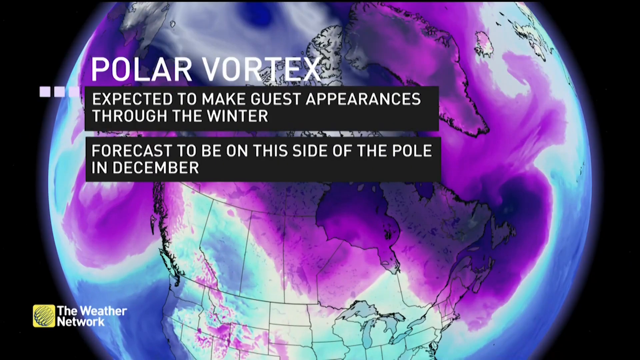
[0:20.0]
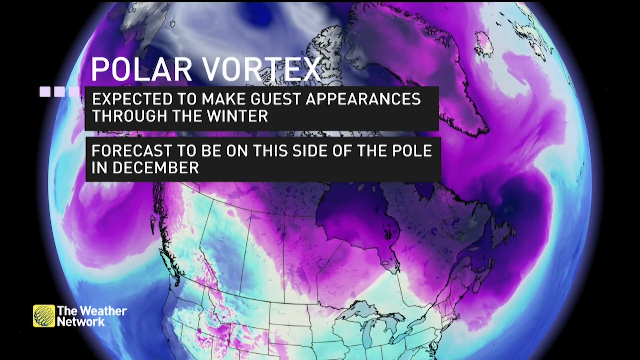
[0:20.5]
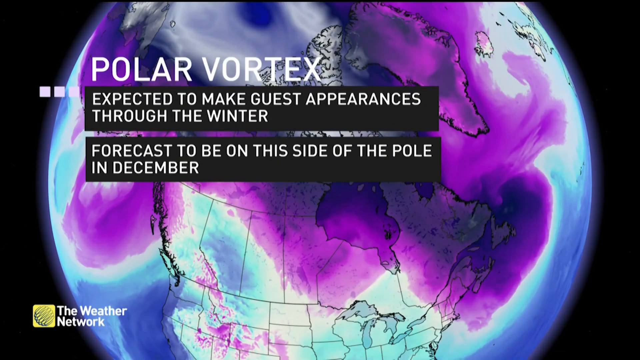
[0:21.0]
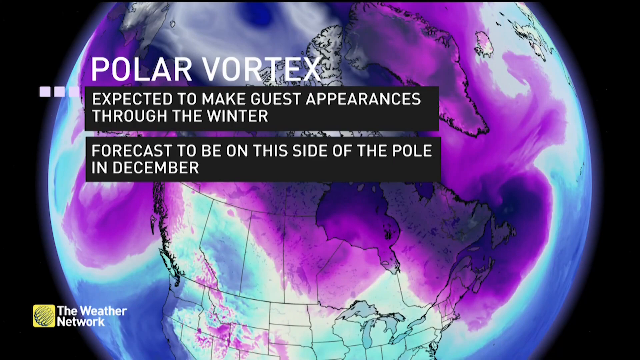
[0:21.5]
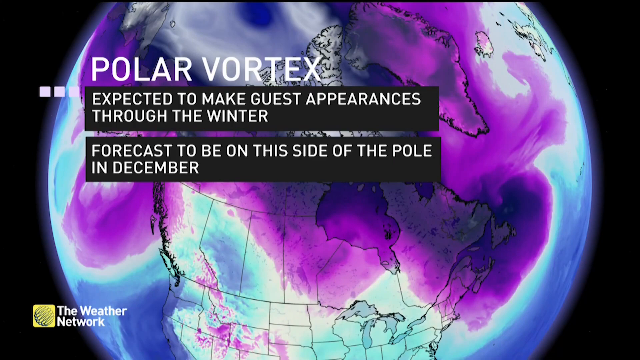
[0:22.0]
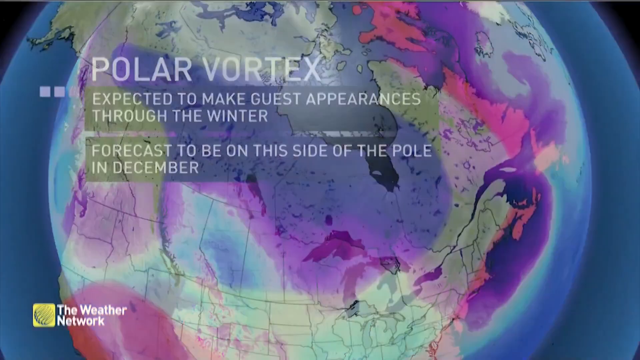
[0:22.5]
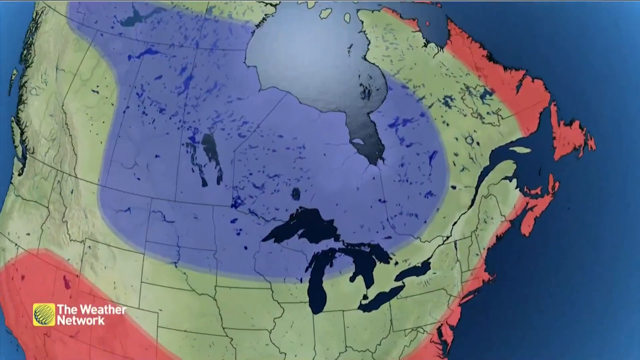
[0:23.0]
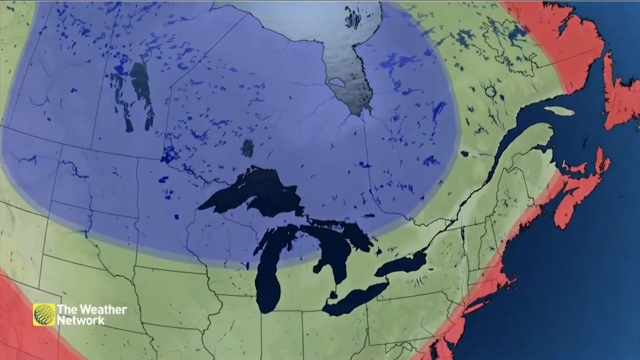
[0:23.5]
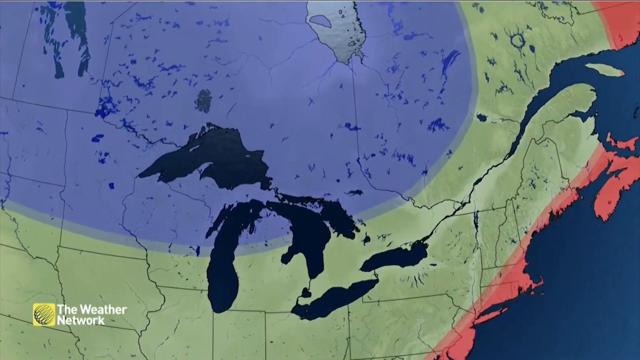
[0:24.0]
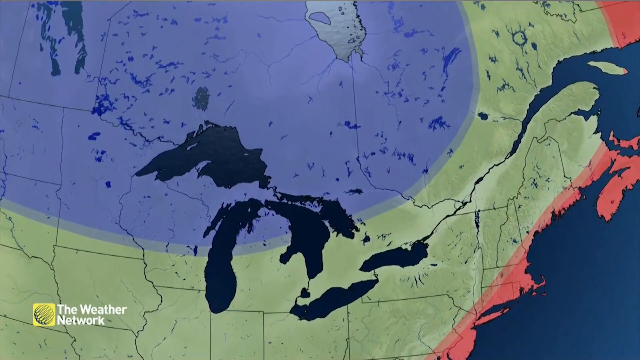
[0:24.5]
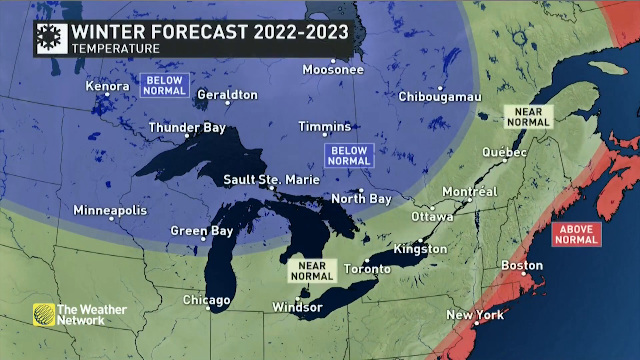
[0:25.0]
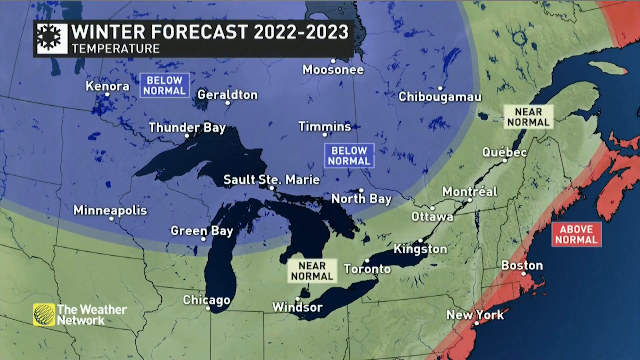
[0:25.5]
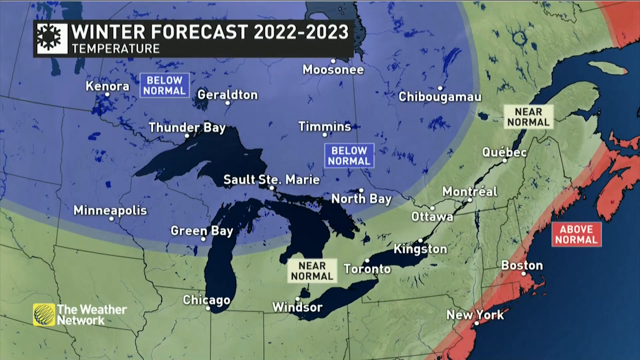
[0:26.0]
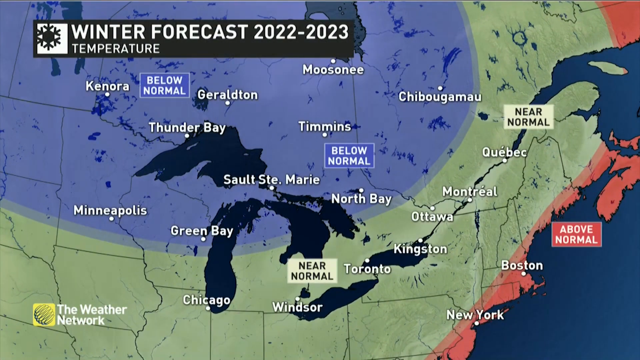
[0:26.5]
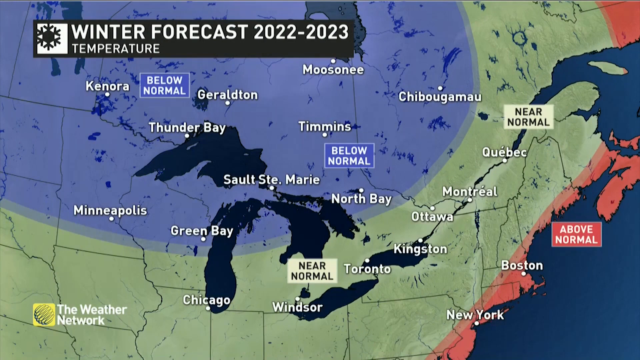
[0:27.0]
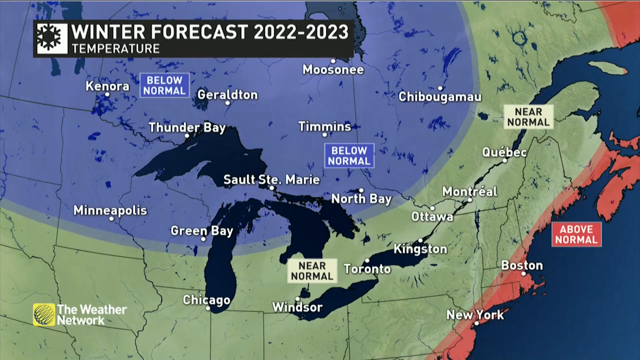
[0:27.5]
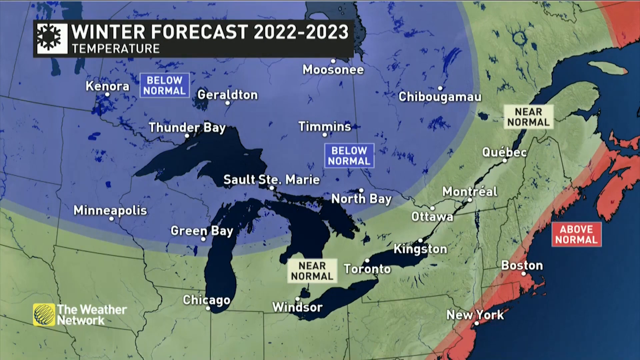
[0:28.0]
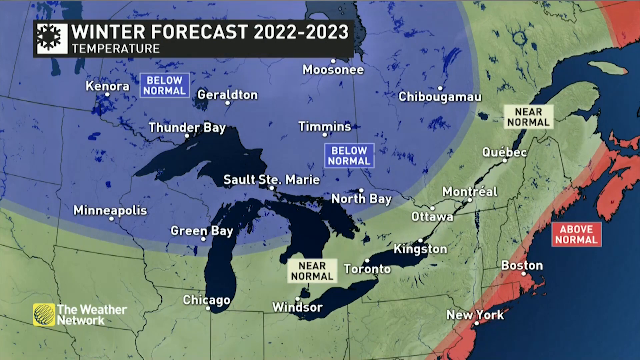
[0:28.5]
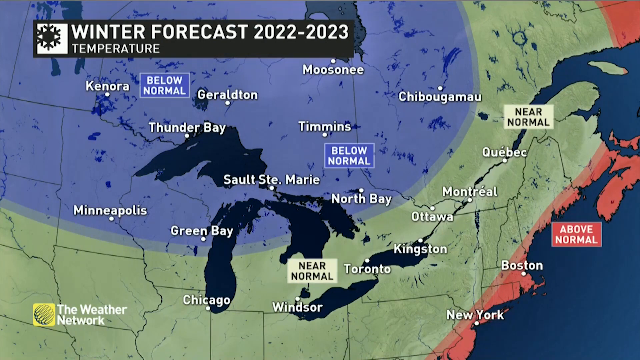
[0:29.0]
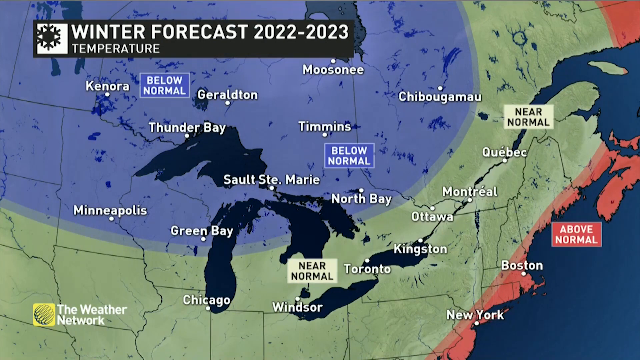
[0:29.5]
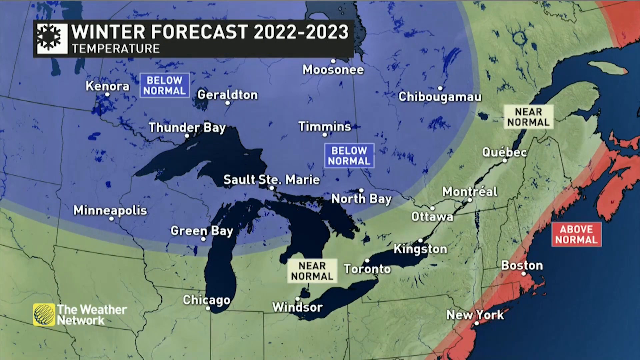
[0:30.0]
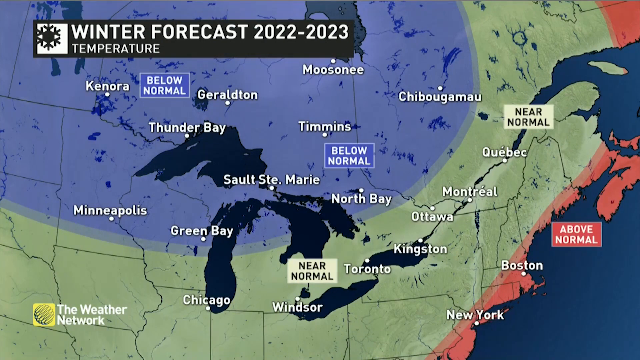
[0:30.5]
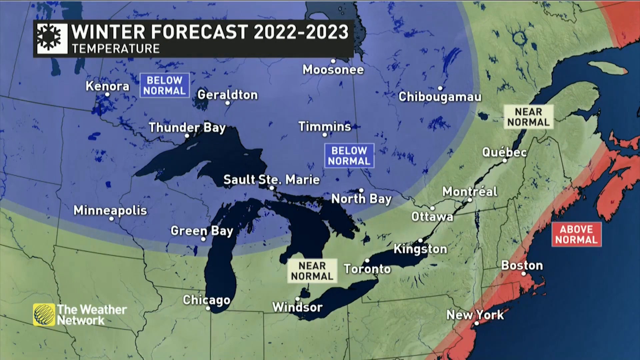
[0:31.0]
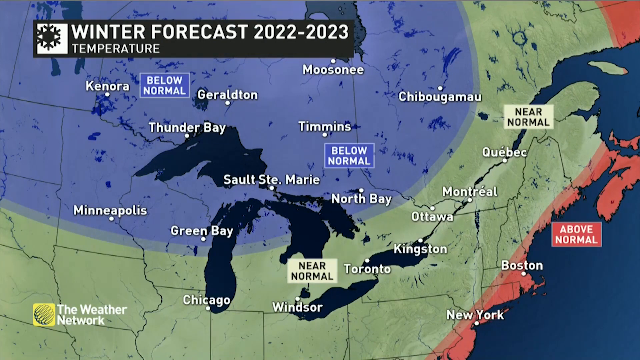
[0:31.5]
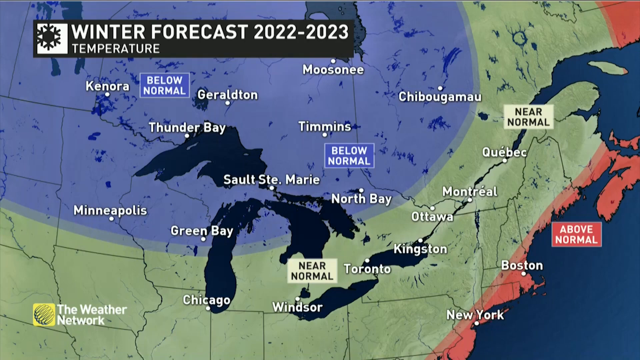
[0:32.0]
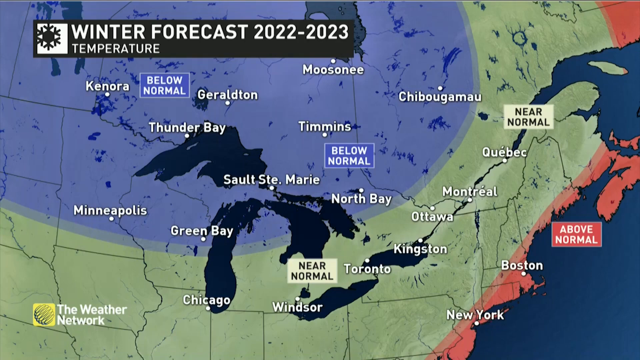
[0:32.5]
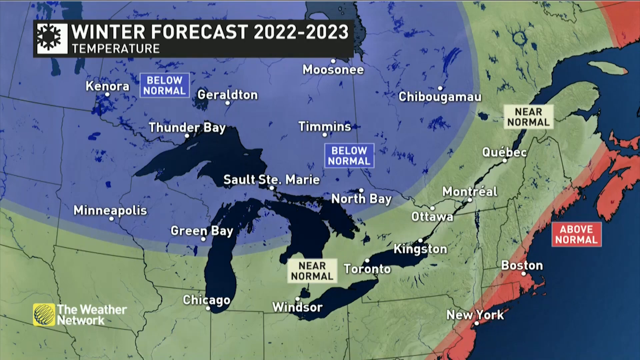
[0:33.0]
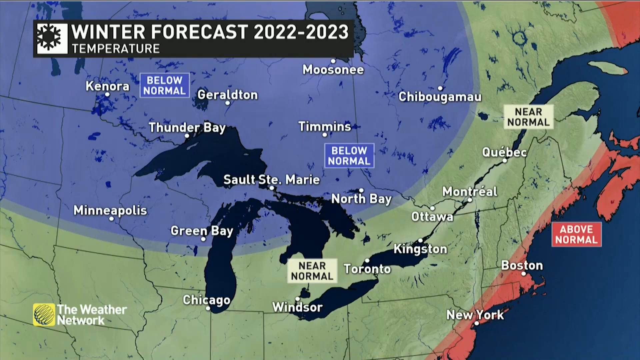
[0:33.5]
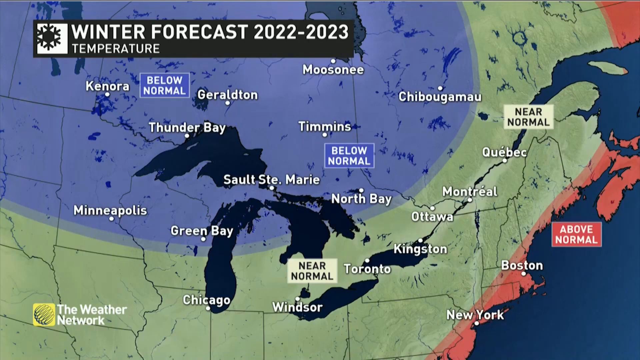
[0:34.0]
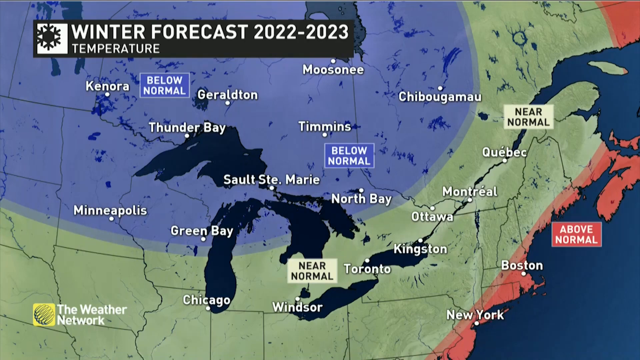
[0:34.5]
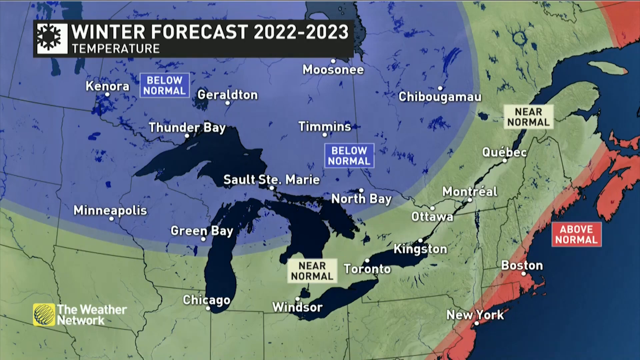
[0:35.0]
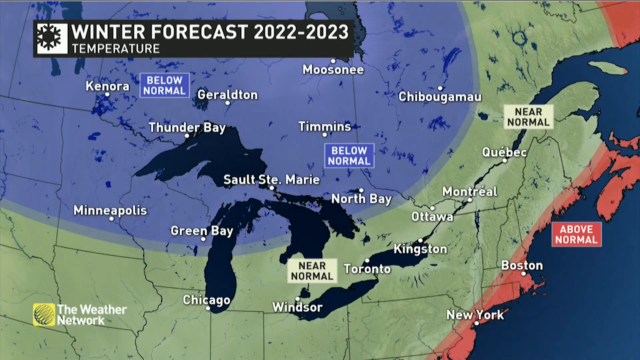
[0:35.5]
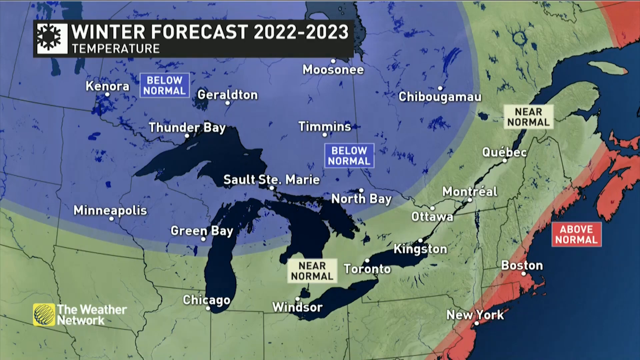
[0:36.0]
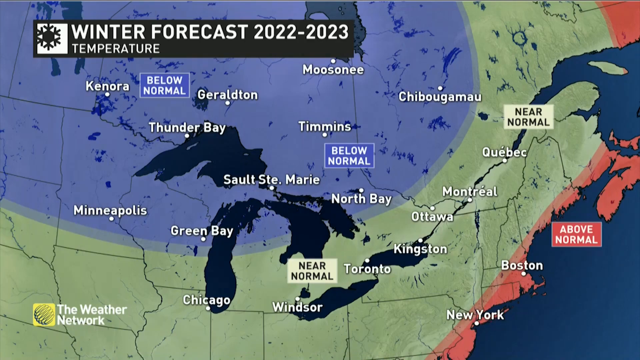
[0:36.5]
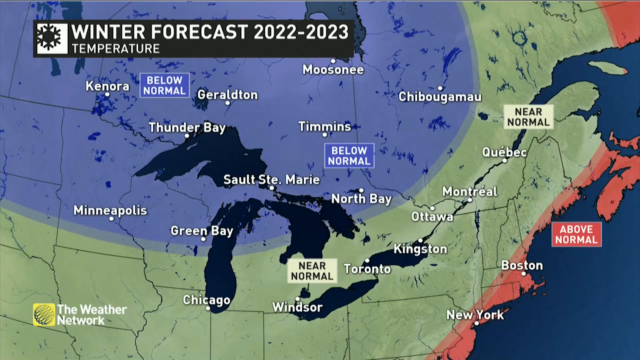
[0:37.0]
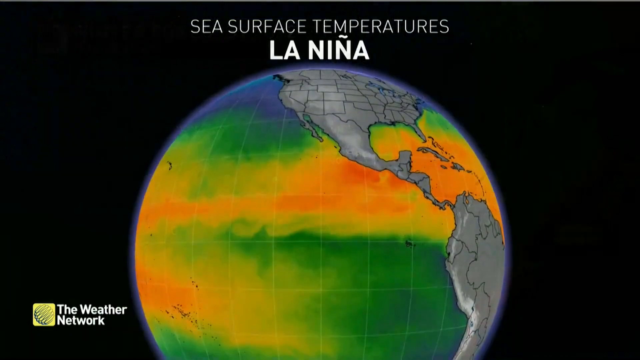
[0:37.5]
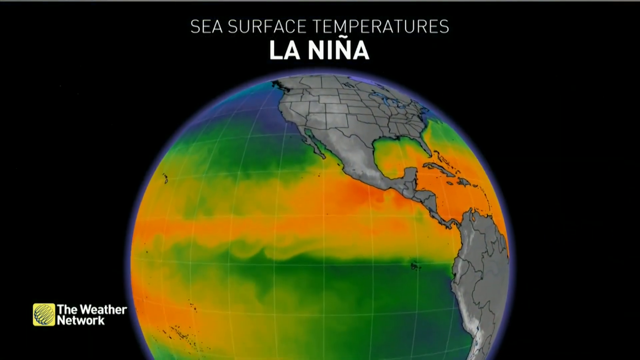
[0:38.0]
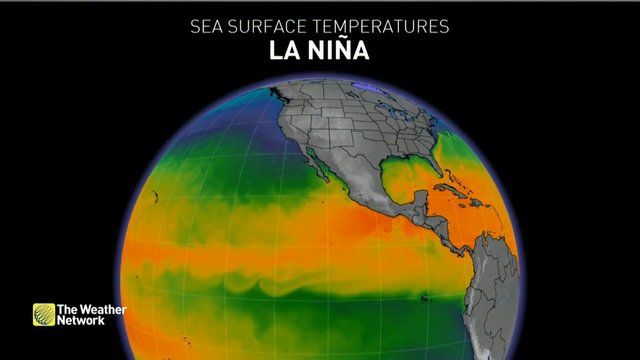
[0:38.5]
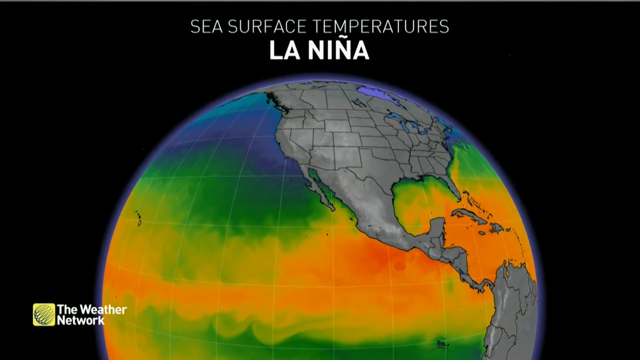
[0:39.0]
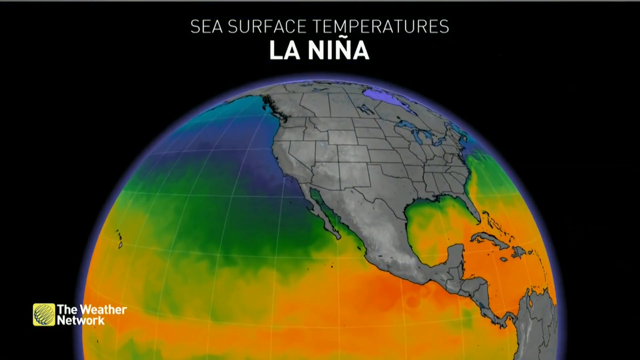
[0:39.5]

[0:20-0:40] Text on screen reads "polar vortex expected to make guest appearances through the winter" and "forecast to be on this side of the pole in December". A winter forecast map shows areas labeled near normal, above normal and below normal, with place names including Kenora, Minipolis and Green Bay. Text about La Nina sea surface also appears.